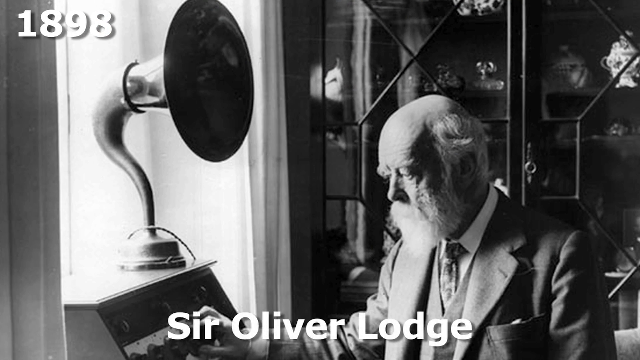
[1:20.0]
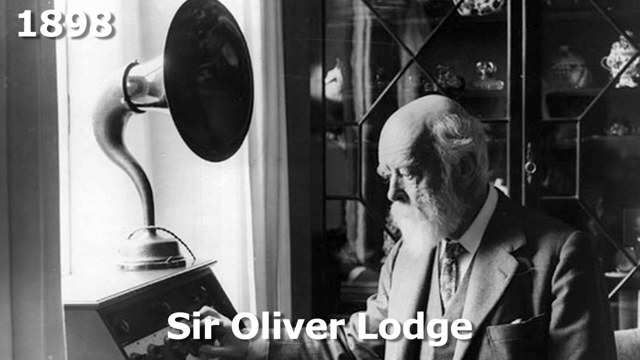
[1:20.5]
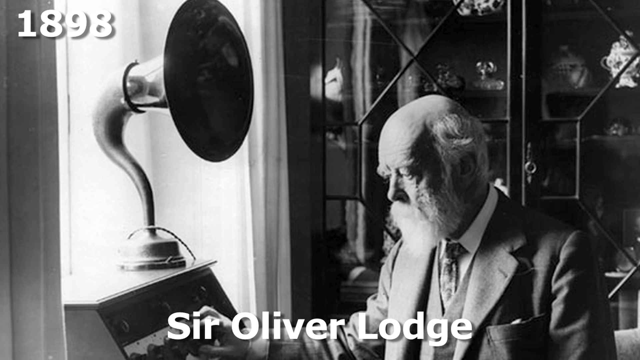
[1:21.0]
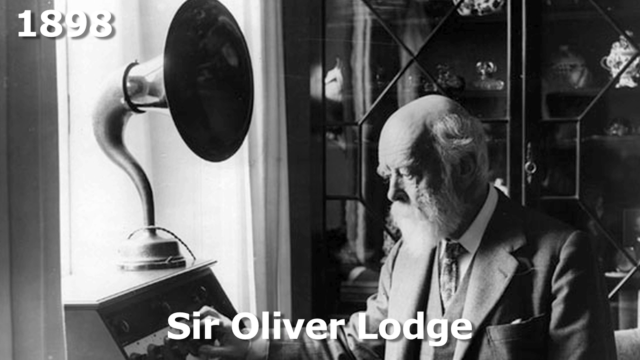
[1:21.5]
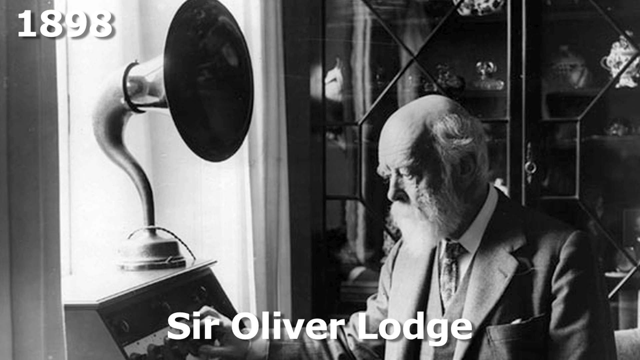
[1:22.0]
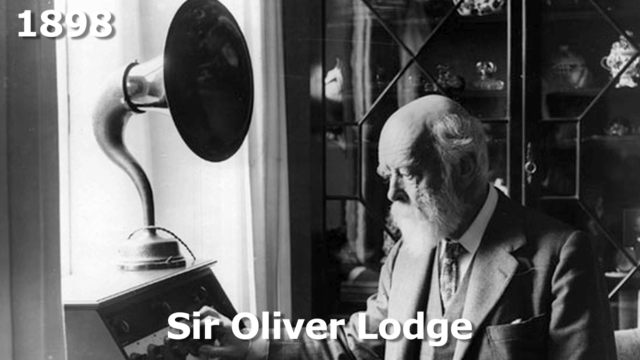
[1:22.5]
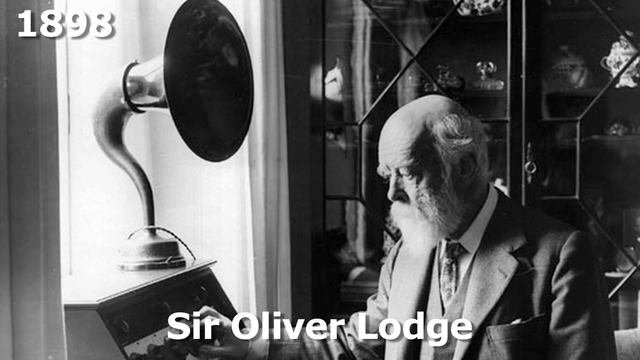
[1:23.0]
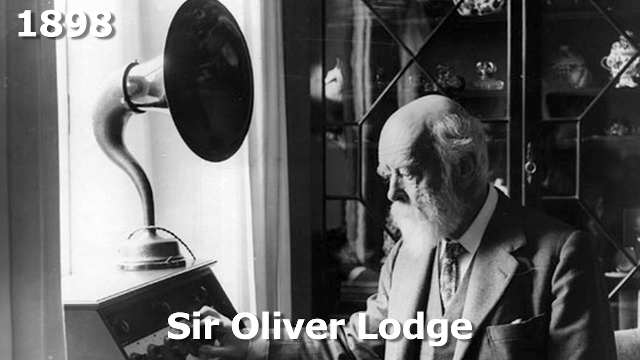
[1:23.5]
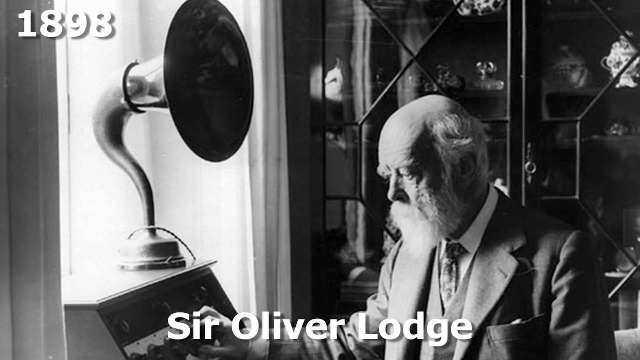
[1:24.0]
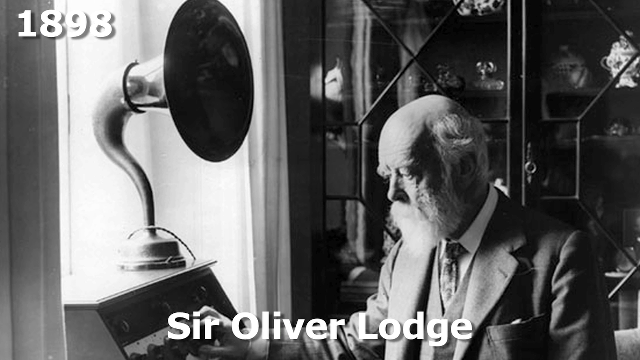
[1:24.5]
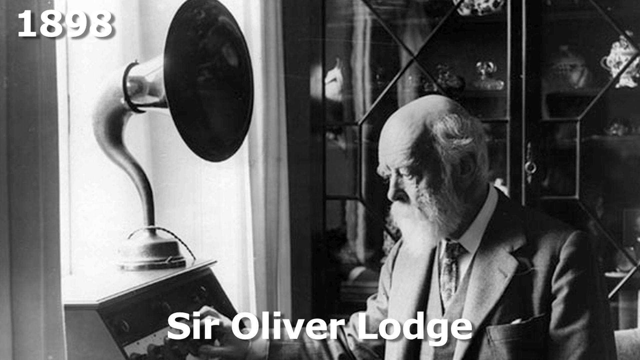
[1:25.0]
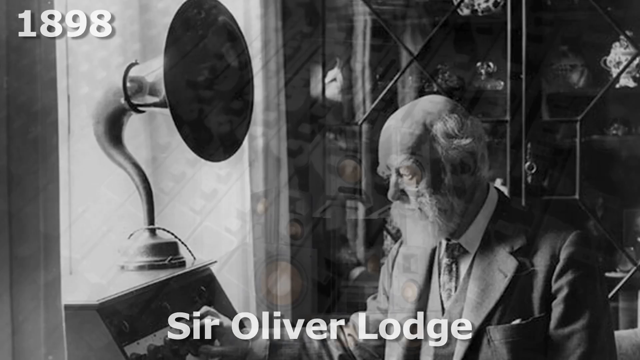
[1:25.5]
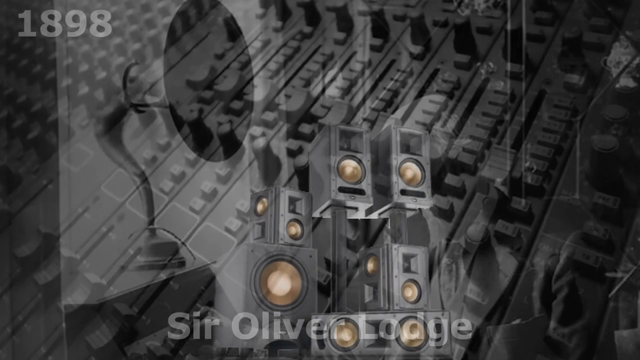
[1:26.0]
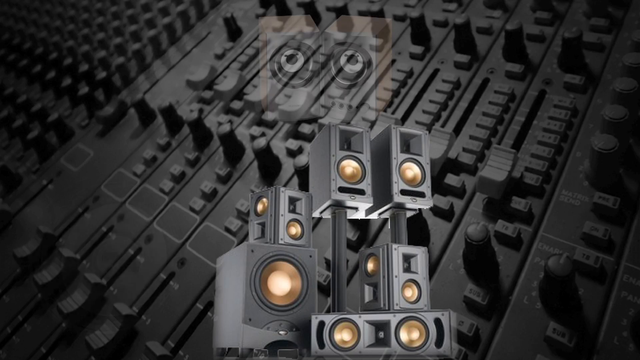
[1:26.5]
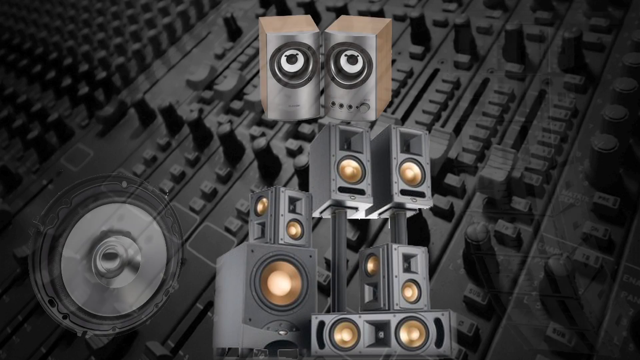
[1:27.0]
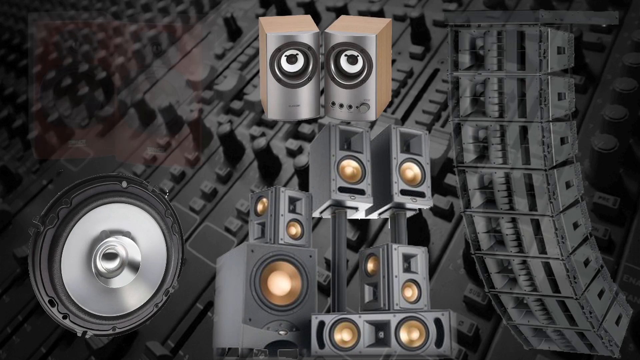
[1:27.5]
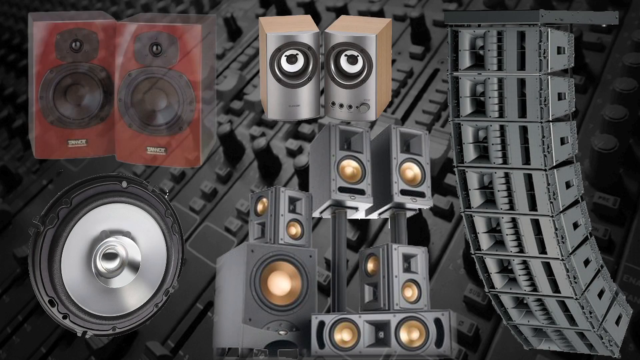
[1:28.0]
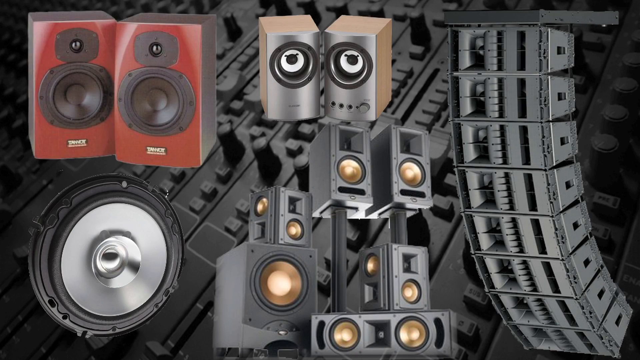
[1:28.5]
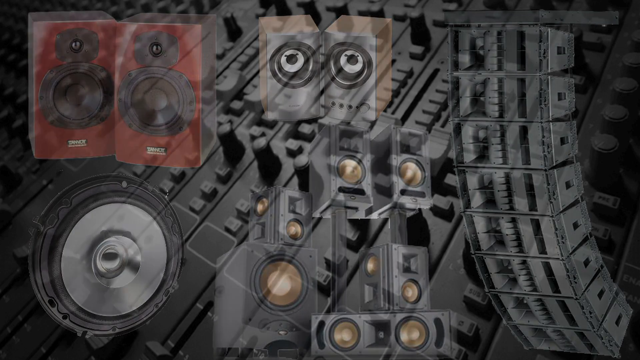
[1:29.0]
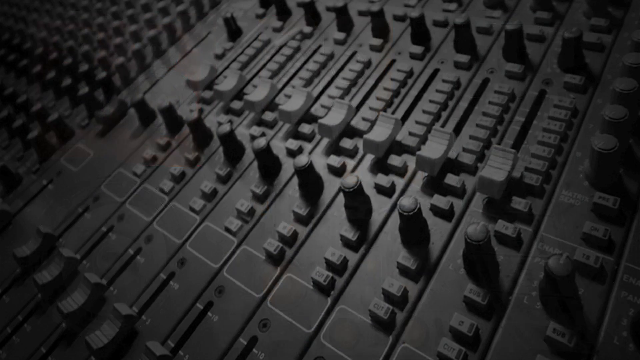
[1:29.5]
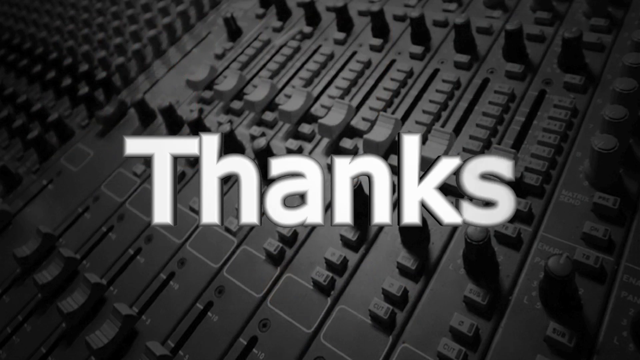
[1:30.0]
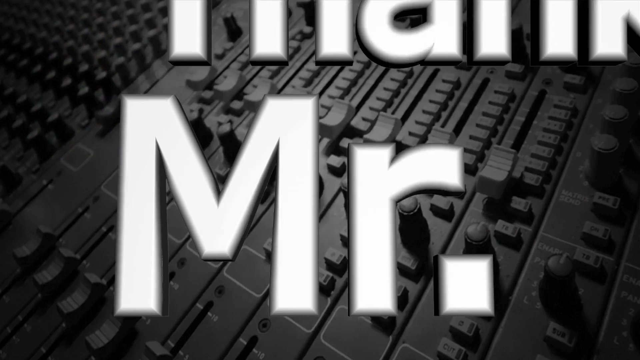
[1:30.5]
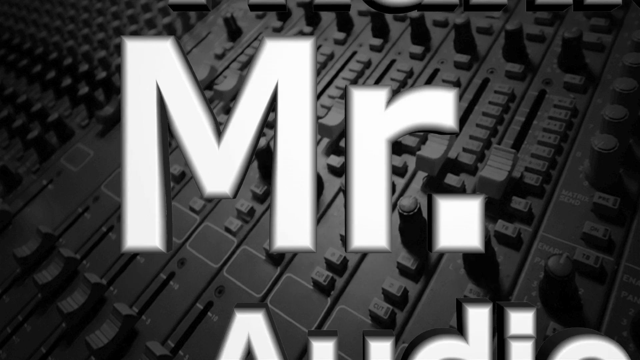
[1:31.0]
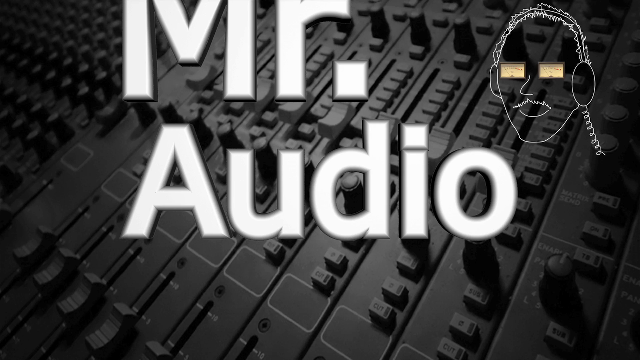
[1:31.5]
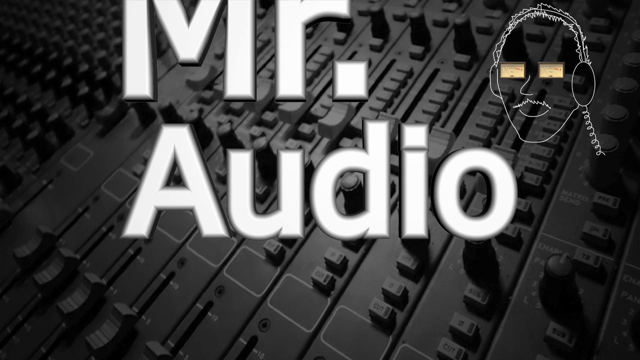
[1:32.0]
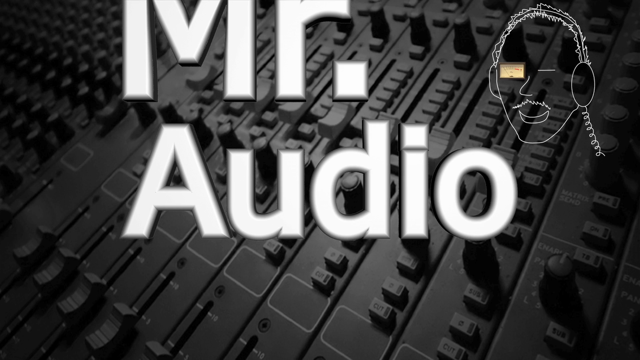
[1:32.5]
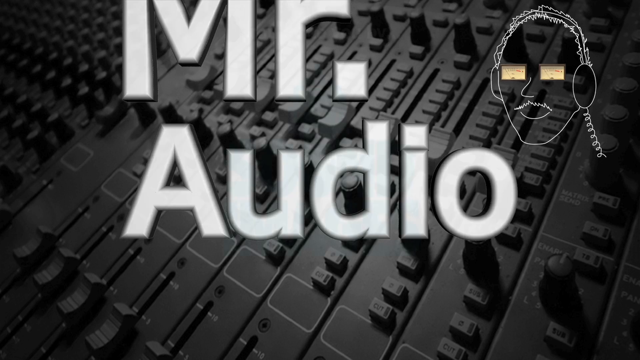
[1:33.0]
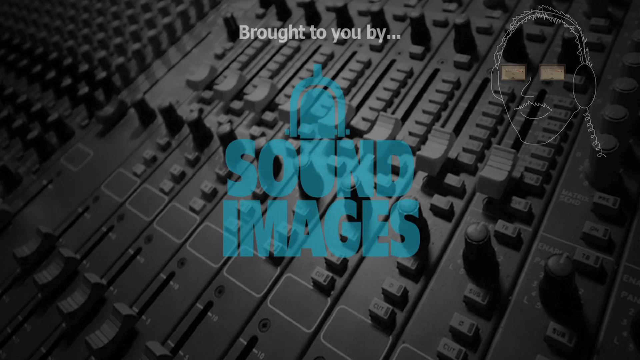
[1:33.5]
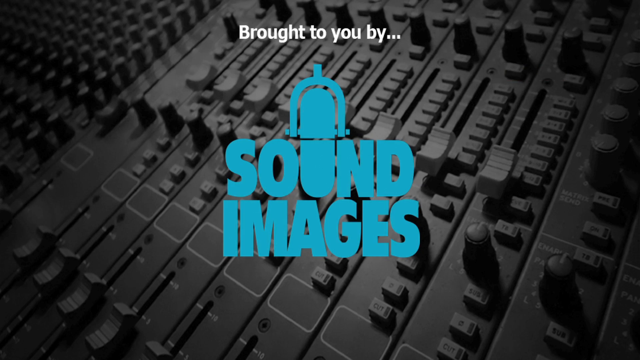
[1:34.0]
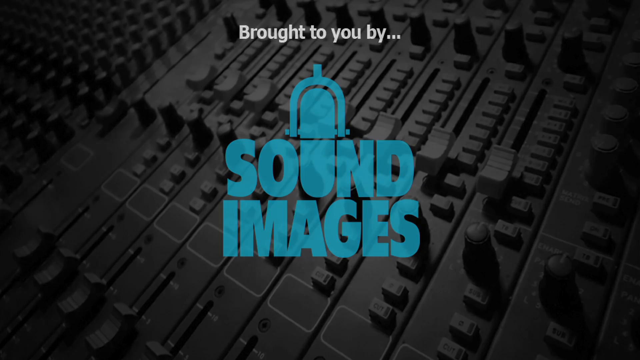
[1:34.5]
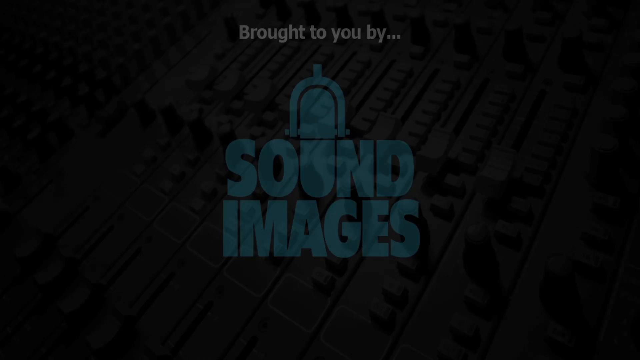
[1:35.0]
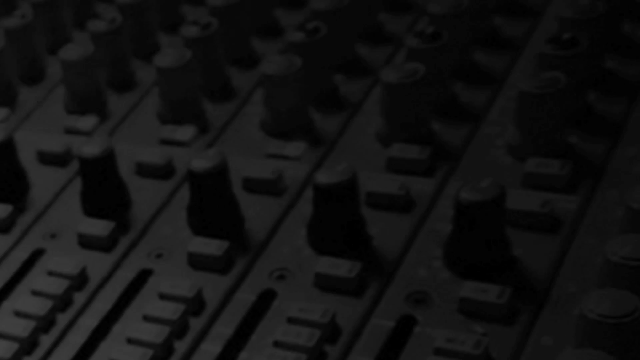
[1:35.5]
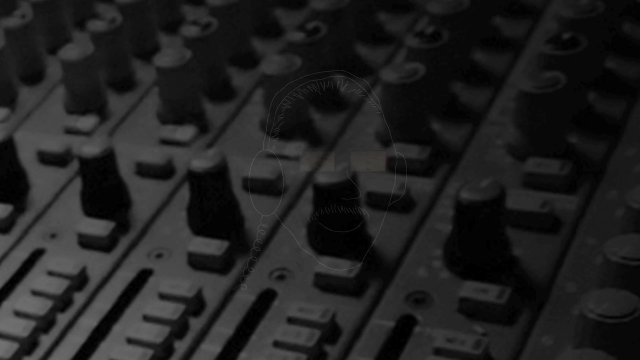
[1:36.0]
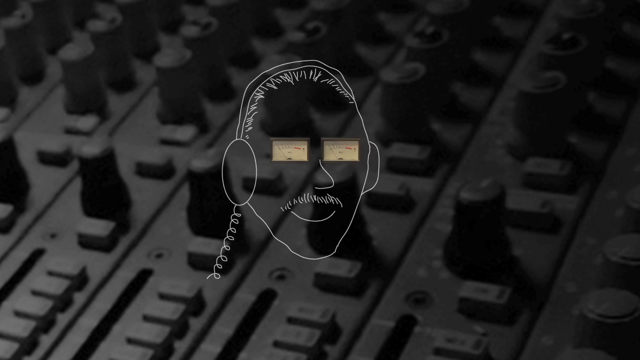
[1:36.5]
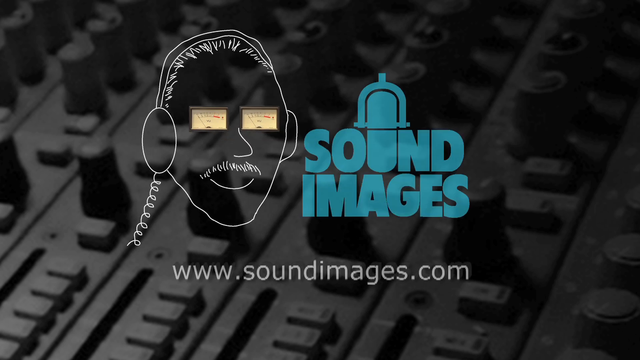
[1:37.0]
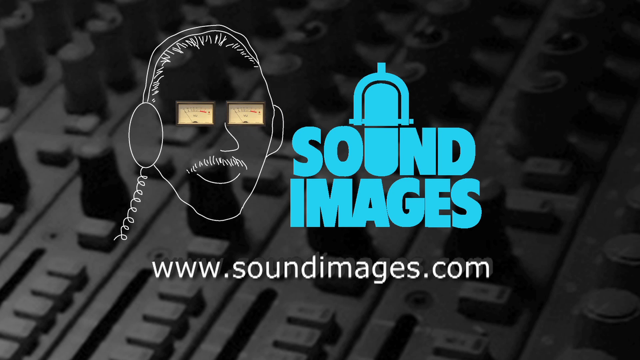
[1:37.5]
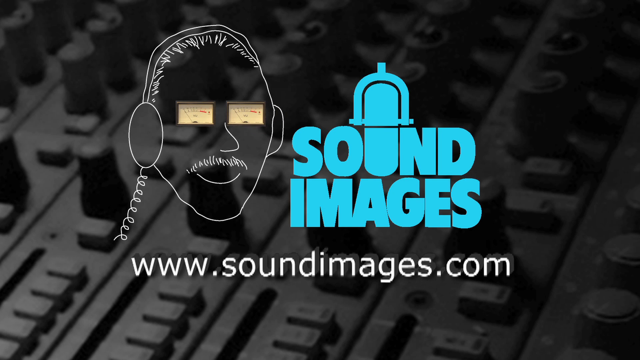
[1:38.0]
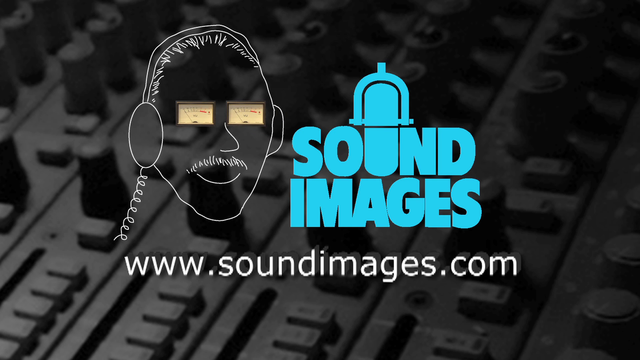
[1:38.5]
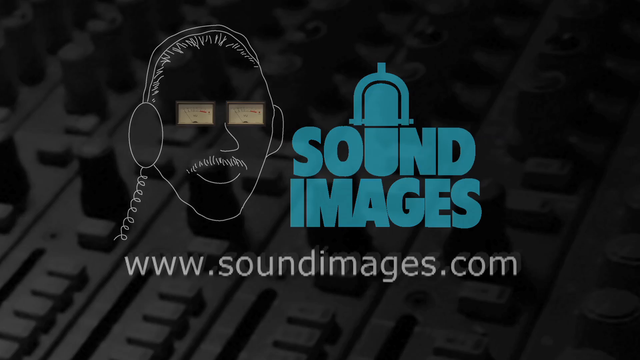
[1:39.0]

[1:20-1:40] Sir Oliver Lodge, from 1898, is an older man with partially balding white hair and a long white beard. He is in a room where the speaker cone is a very large brass contraption, looking intently at the device, with a white china armoire behind him. A new screen appears with different speakers: a typical speaker on the left, followed by an array of modern speakers, and to the right large overhead concert/theater speakers. Text appears saying "Thanks Mr. Audio" with a picture of Mr. Audio wearing headphones to the right; he winks once. The text "Brought to you by sound images" appears, with "sound images" in blue and the U shown as a microphone. Mr. Audio appears on the left, Sound Images on the right, and the website "www.soundimages.com" below.